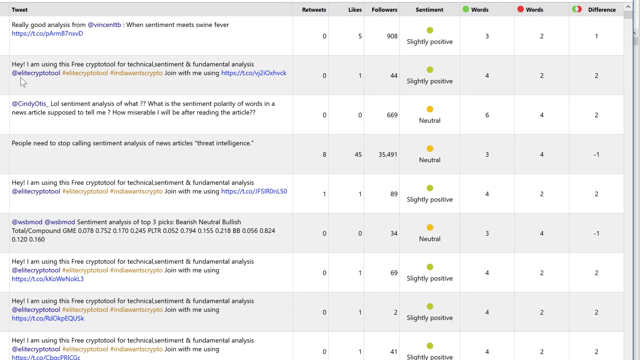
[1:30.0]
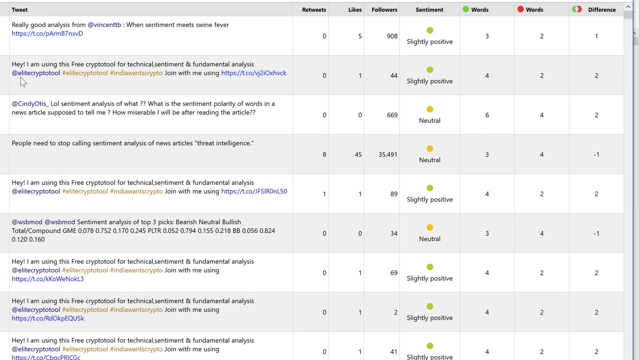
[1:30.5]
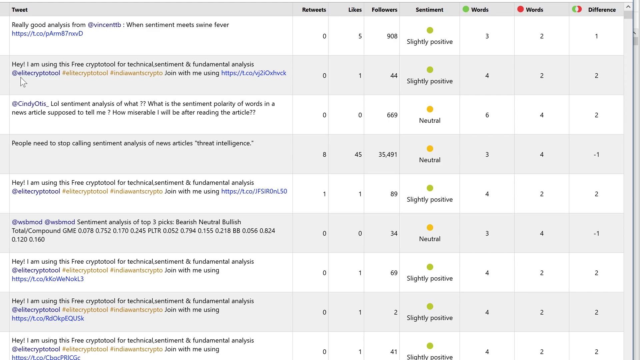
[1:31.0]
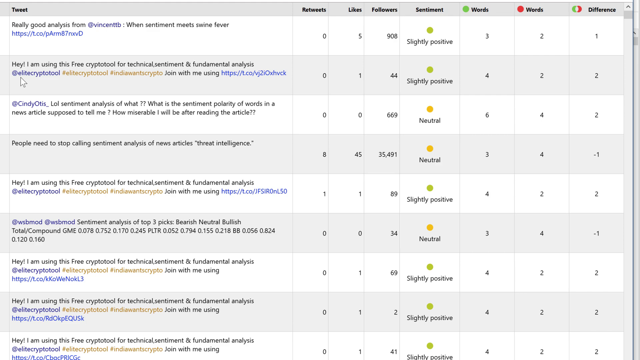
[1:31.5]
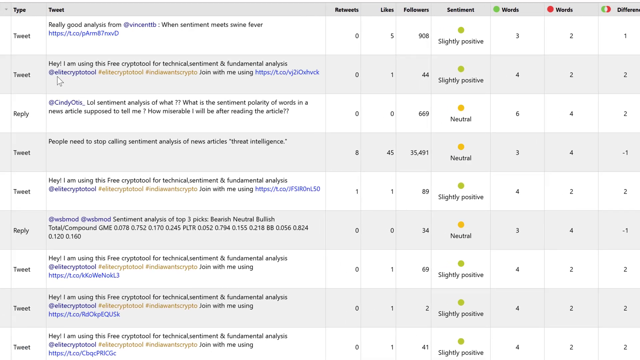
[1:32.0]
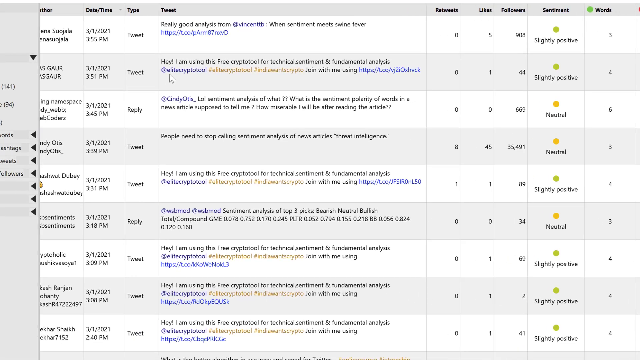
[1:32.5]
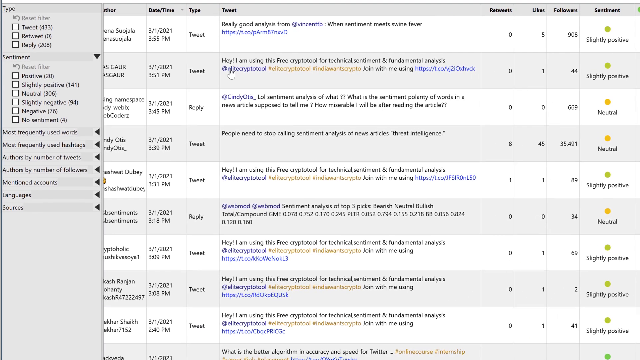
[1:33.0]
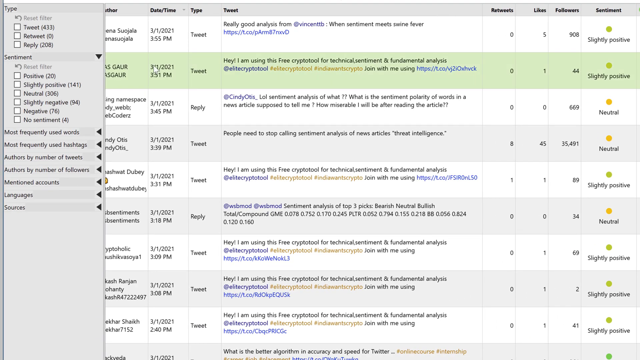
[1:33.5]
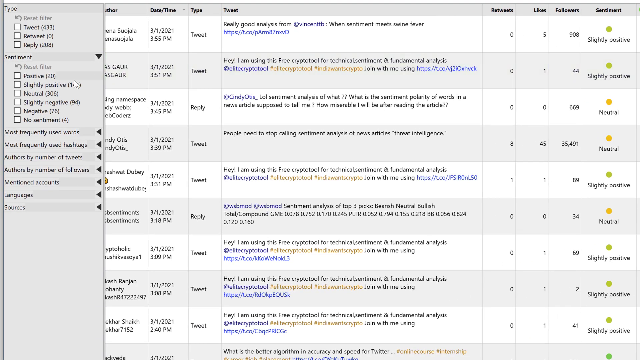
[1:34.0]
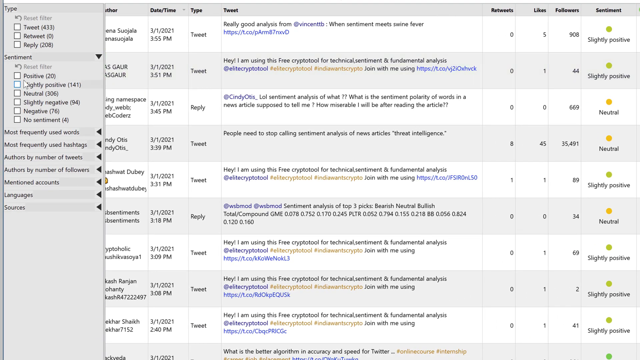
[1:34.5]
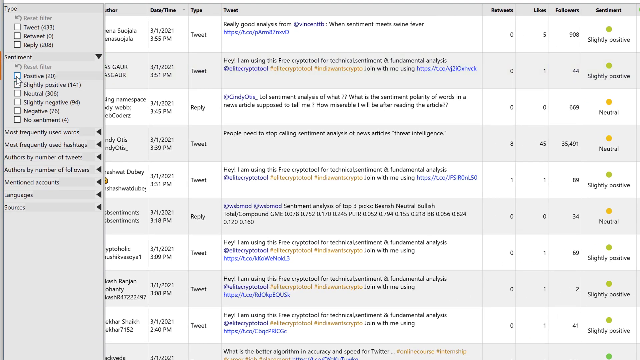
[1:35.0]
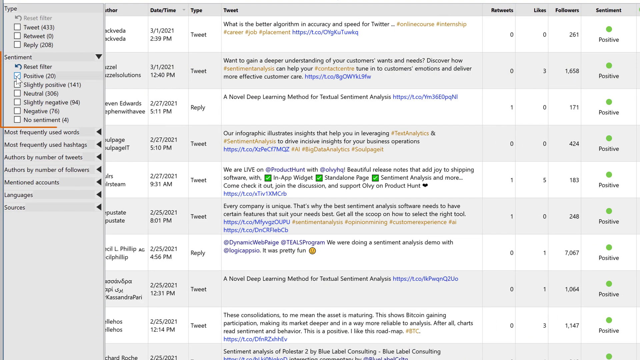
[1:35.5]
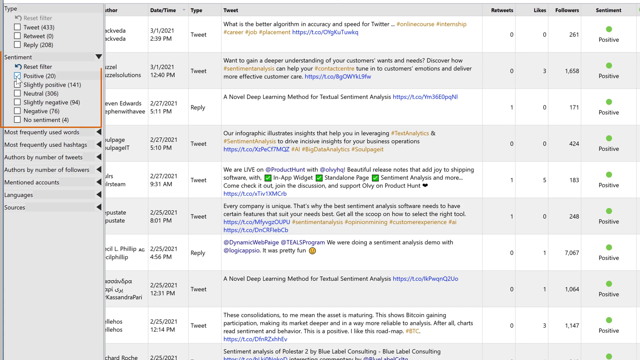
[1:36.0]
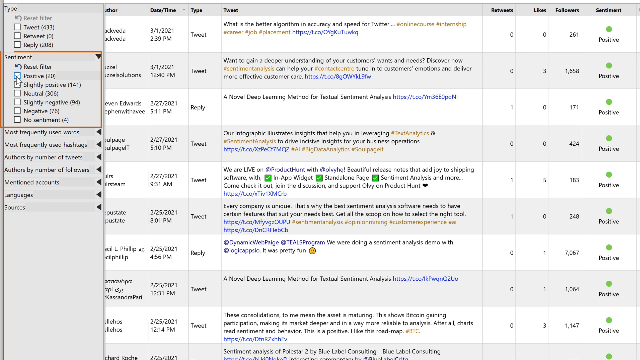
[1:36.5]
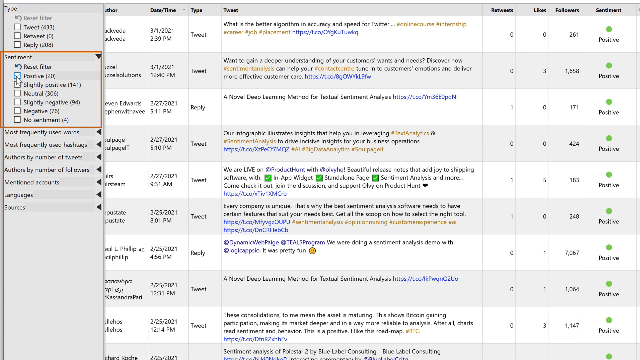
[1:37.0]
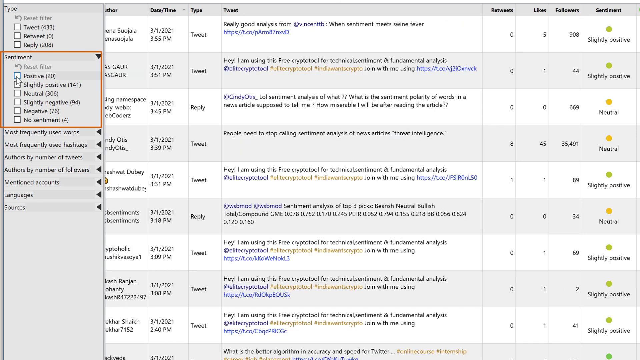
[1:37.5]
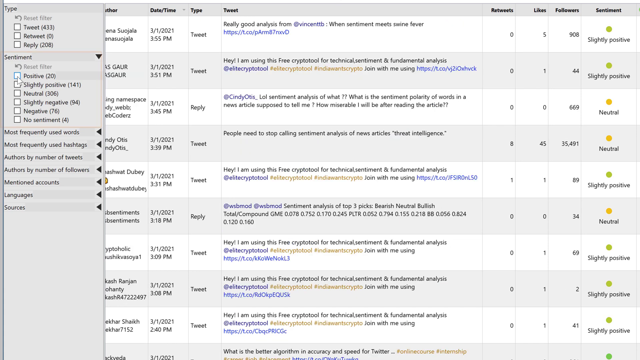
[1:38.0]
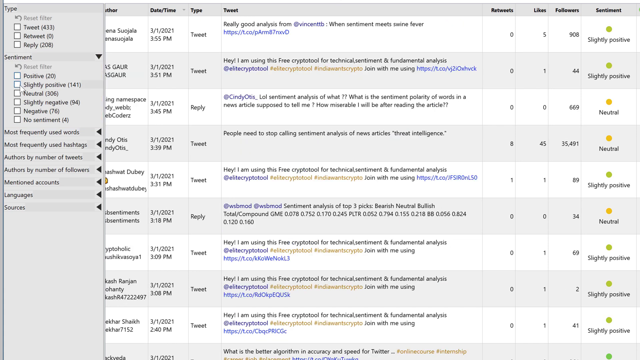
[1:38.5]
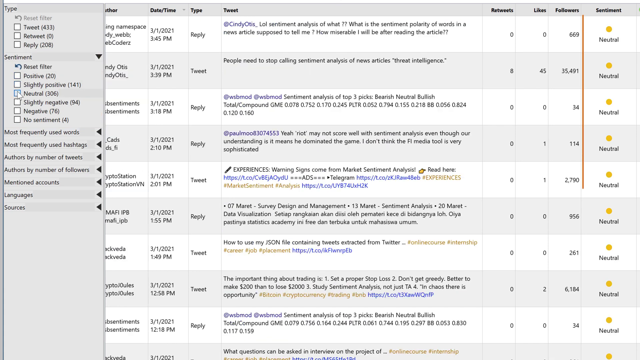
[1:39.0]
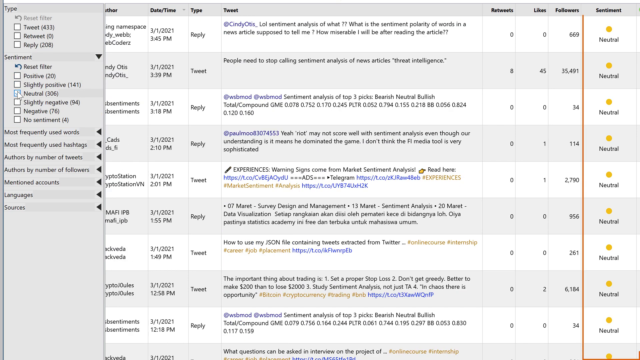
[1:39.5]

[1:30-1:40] The view is pulled out to the full dashboard, showing all the columns, including the tweets and the filter column. As the cursor moves around the screen, a red outline highlights the portion it hovers over. It stops over the sentiment category in the filter, which lists positive 20, slightly positive 141, neutral 306, slightly negative 94, negative 76, and no sentiment. The cursor hovers over the positive box, scrolls down, and selects the neutral box, and the tweets are filtered so the sentiment column is filled with the orange or yellow circles of neutral sentiment. The filter box collapses and the view zooms back in on the columns for tweets, retweets, likes, followers, sentiment, positive words, negative words, and the symbol with green on one side, red on the other, and yellow in the center, apparently indicating an equal difference.